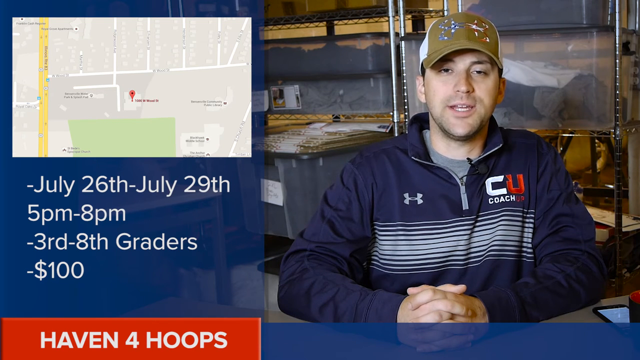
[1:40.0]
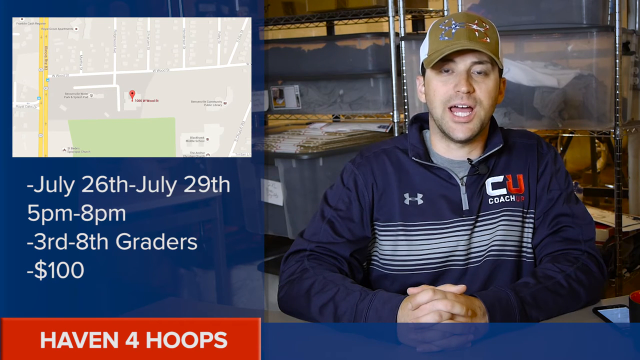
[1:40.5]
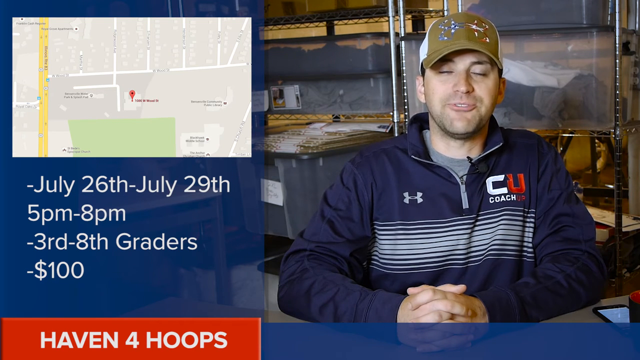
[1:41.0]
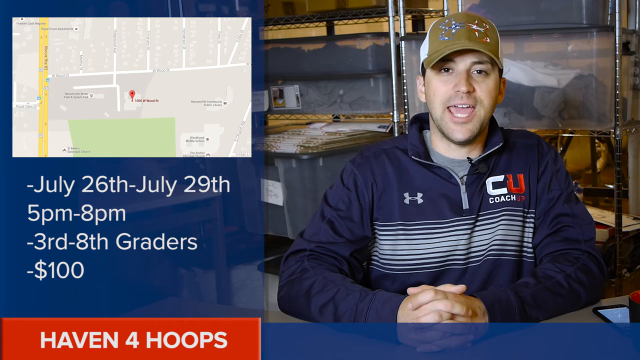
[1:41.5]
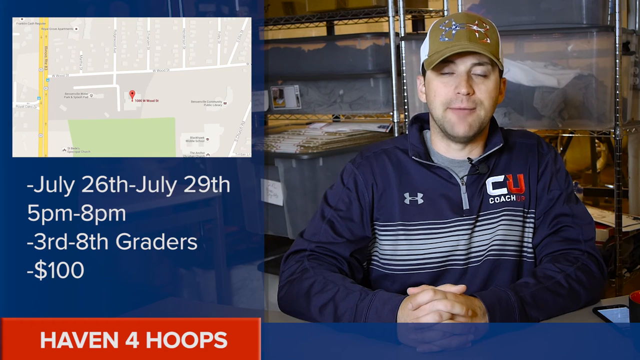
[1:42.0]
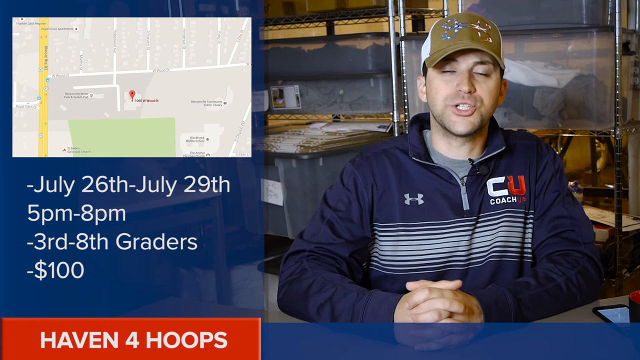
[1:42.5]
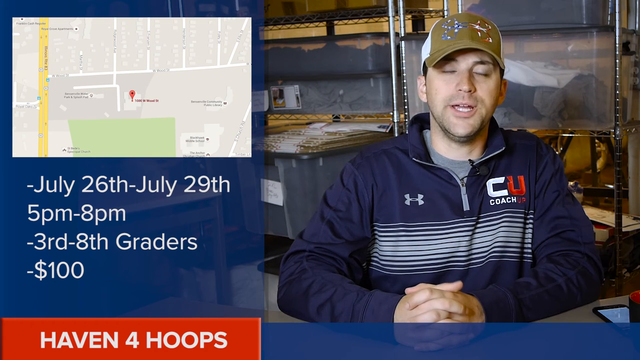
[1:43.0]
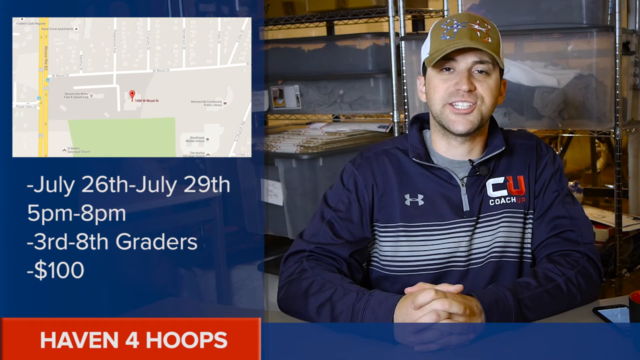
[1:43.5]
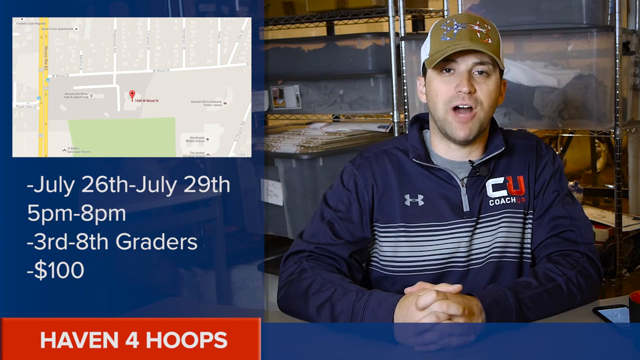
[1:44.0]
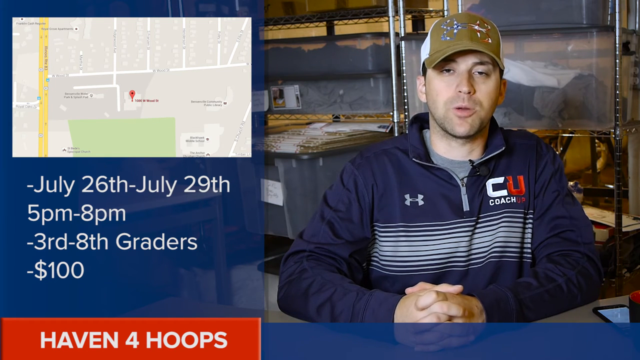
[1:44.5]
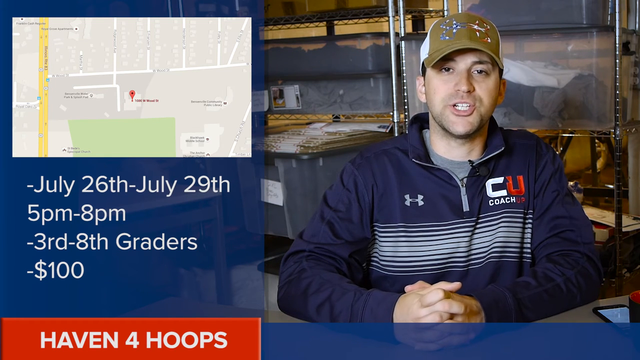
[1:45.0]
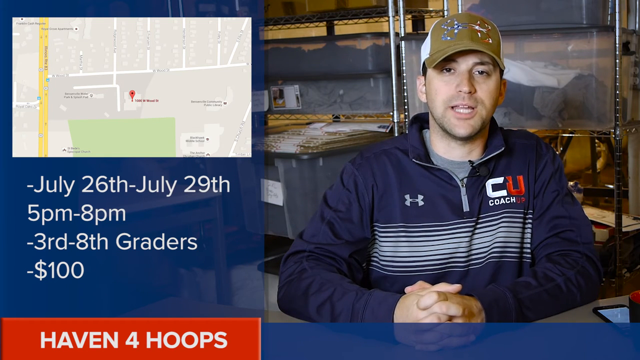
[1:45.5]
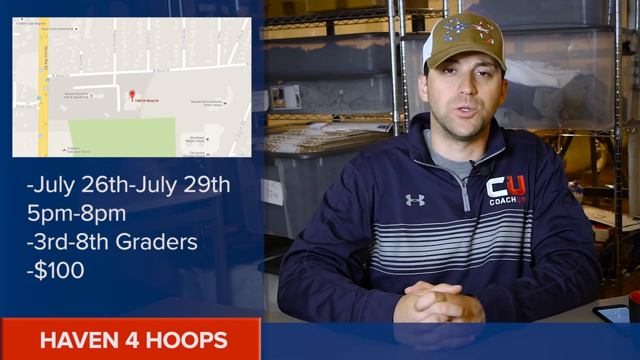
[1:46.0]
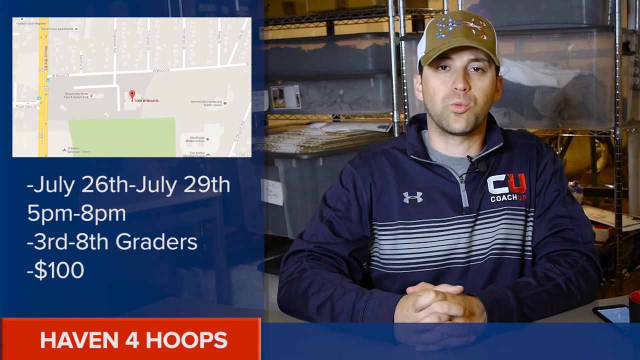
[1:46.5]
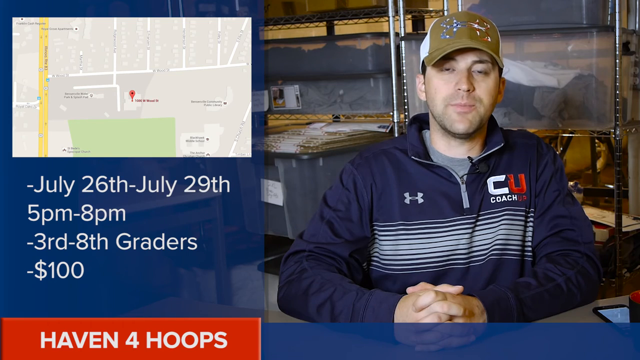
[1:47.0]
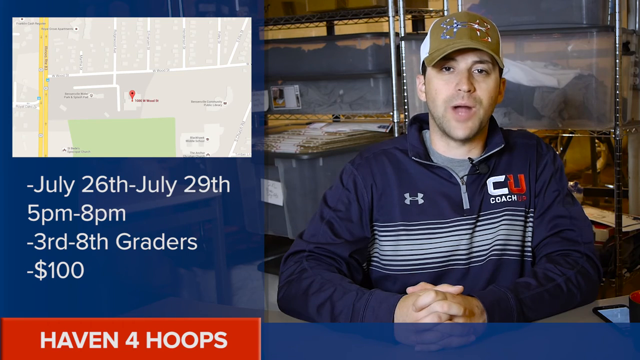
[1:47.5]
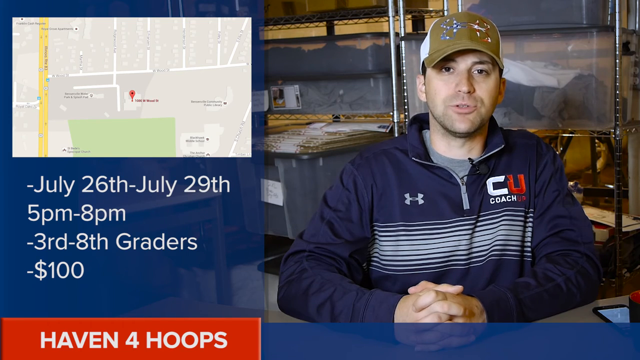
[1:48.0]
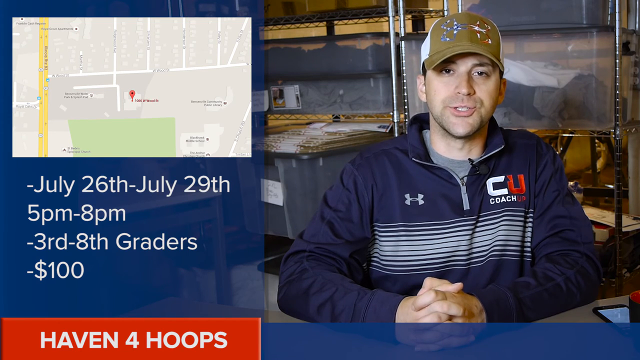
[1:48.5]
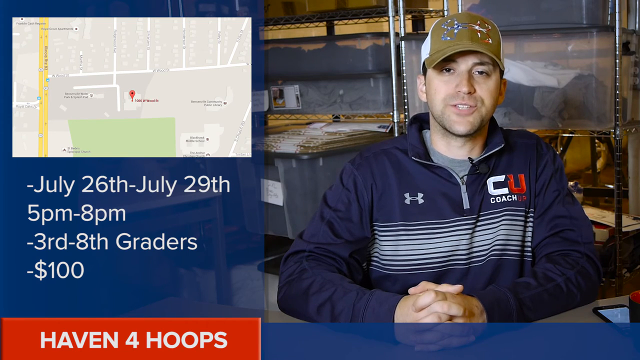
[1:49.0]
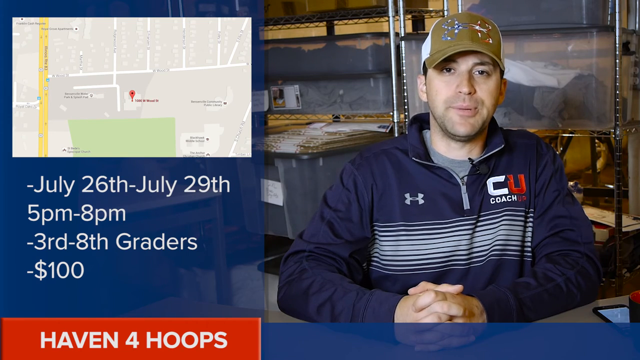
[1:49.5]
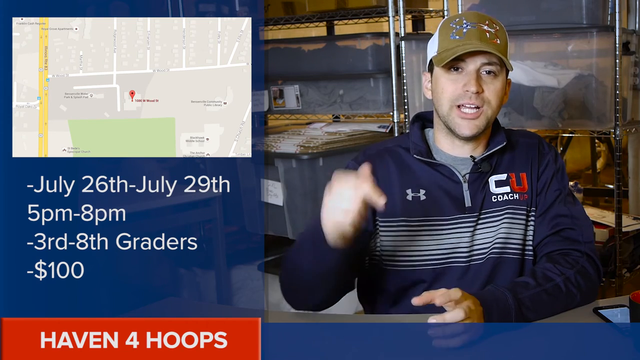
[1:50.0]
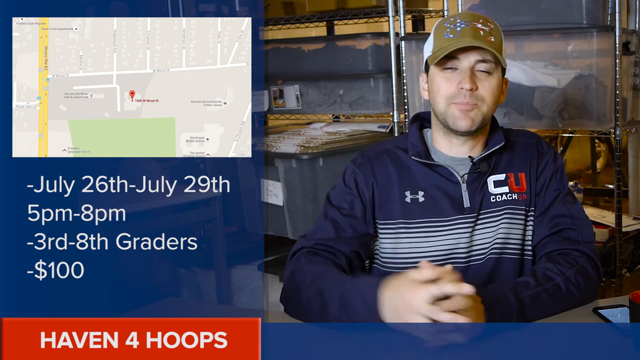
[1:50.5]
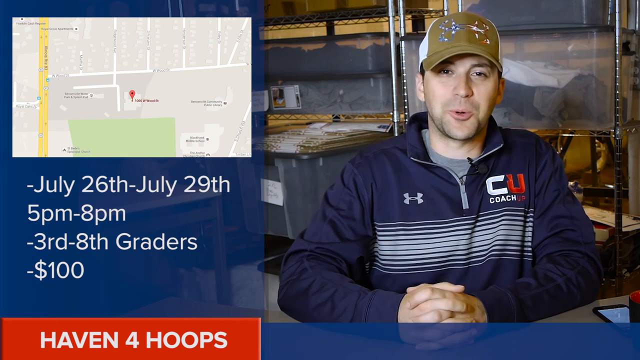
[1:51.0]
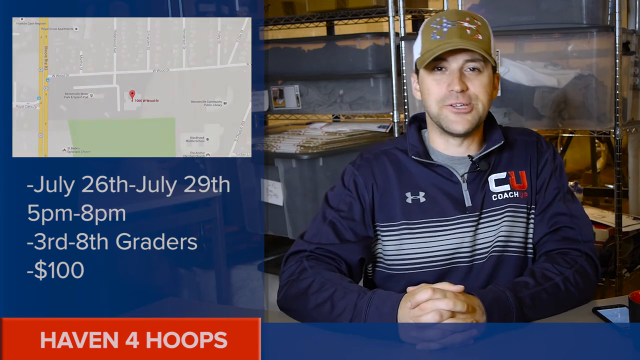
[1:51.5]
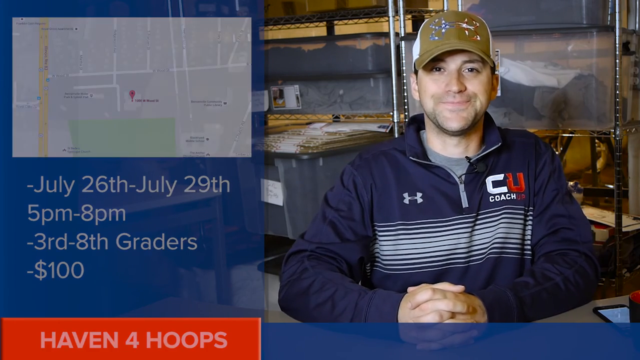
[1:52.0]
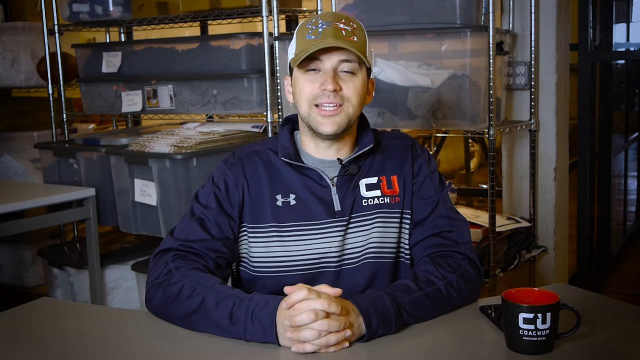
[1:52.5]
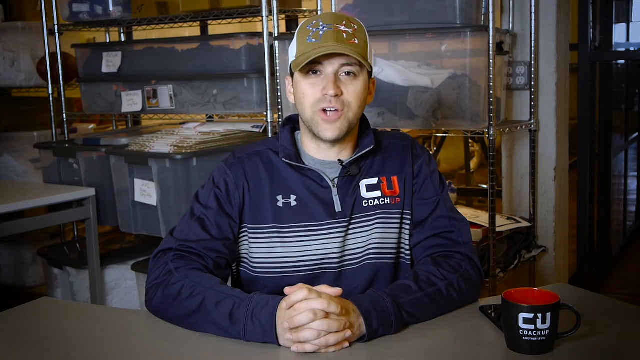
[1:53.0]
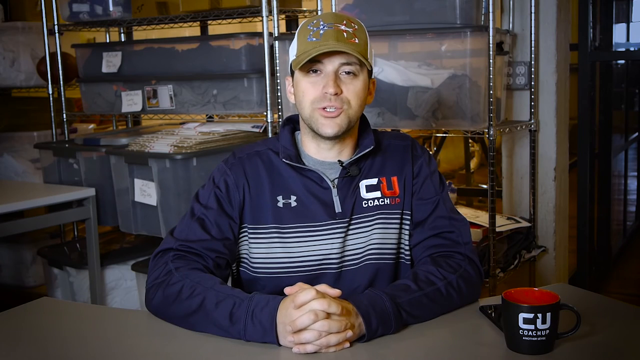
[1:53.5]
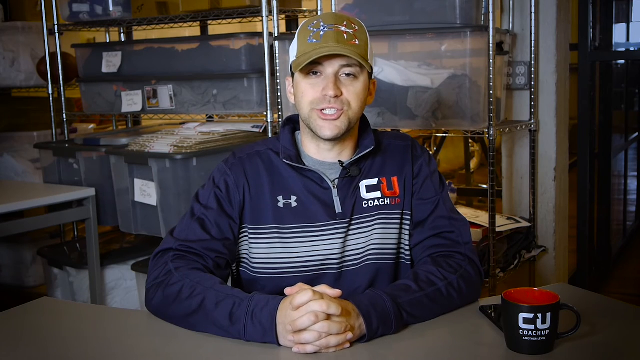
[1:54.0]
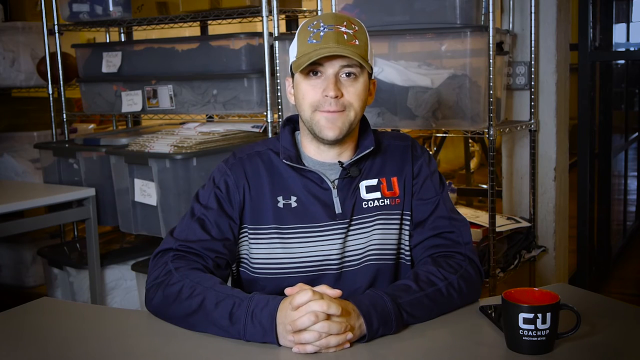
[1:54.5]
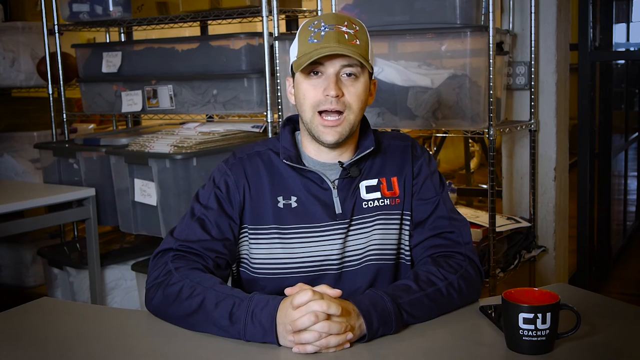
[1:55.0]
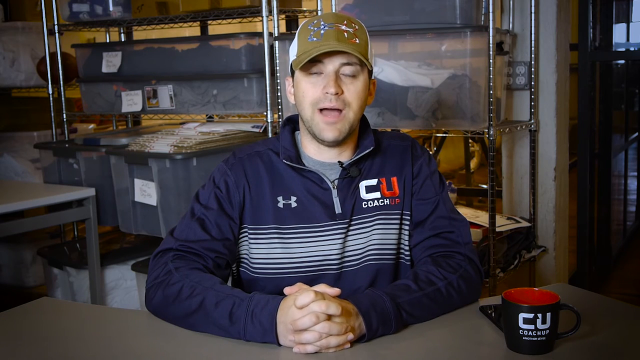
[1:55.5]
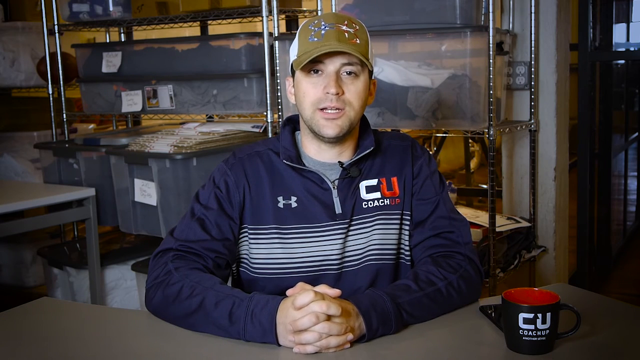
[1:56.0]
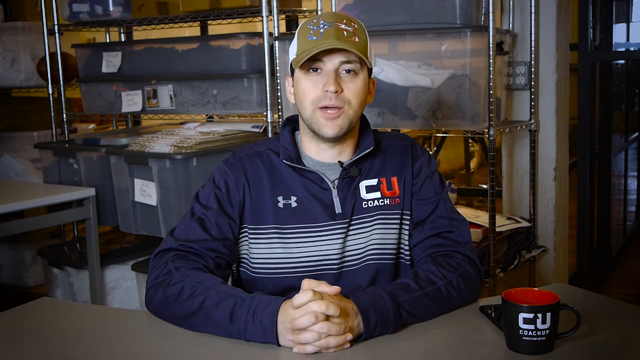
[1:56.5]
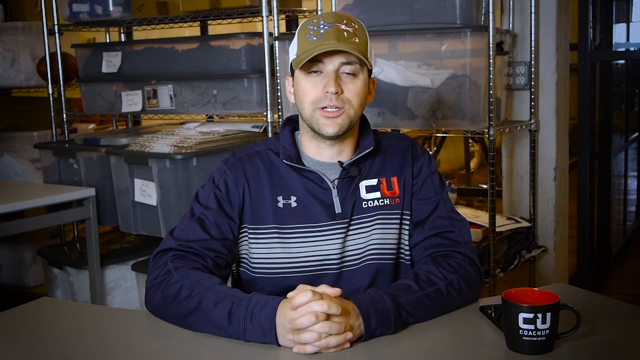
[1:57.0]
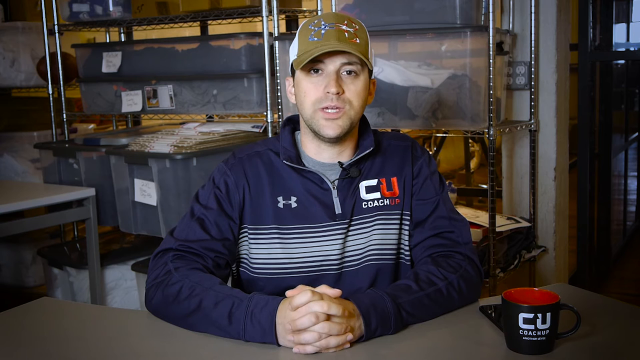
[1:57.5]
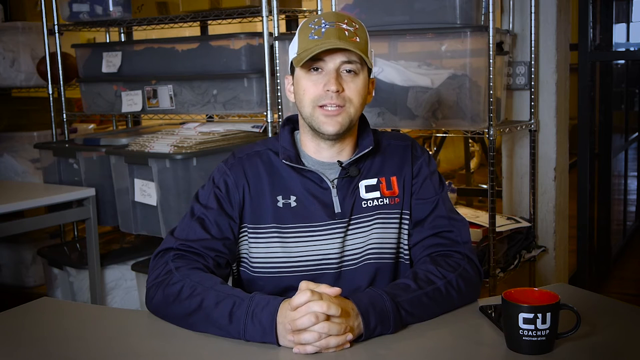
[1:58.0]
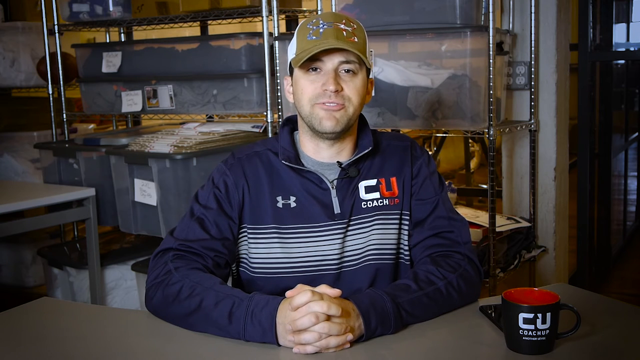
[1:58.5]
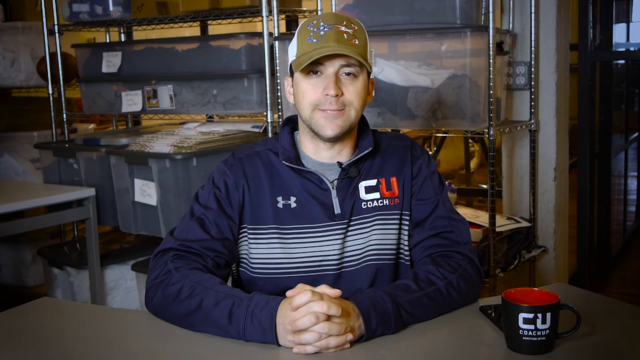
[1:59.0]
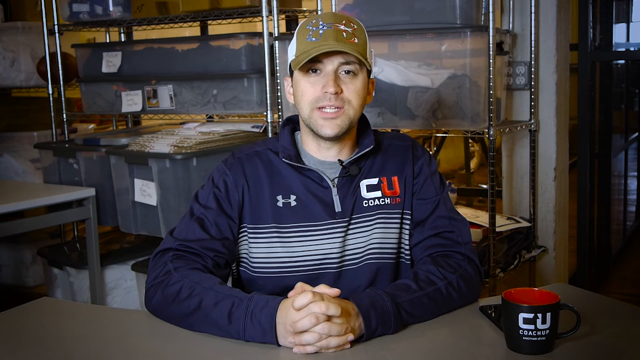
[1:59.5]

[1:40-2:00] A man talks on camera, filming himself while sitting in what looks like a little office area, with a bunch of storage bins holding stuff behind him, so it looks like a home office that is also a storage area. At the start, a Google map with a red pin is on the left side of the screen, and below it the text reads "July 26th through July 29th, 5 p.m. to 8 p.m., 3rd through 8th graders" with a cost of $100. He wears a dark blue sweatshirt with white horizontal lines across the center. At one point he raises his left hand and points down to the bottom of the screen, where there are some words. Above the white lines on one side of the sweatshirt is the business logo, the two letters "CU," with "coach" underneath.